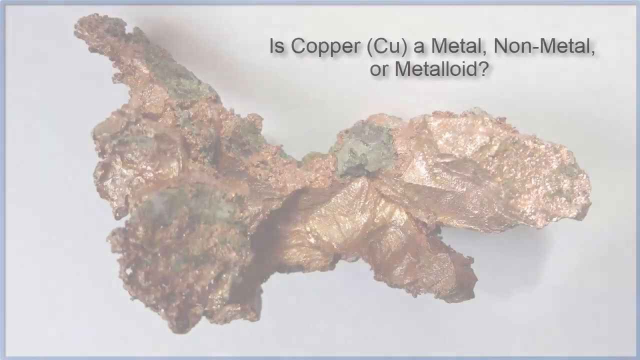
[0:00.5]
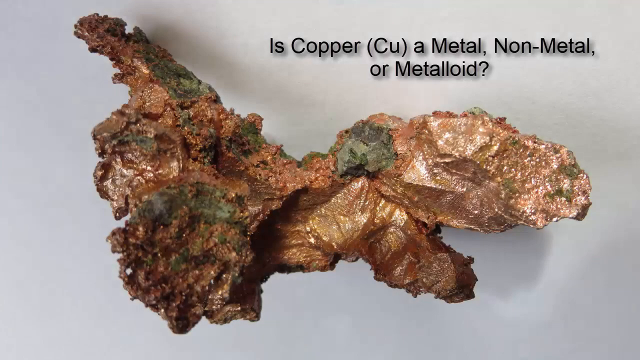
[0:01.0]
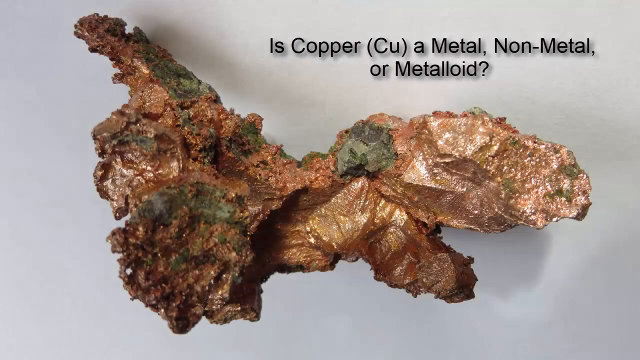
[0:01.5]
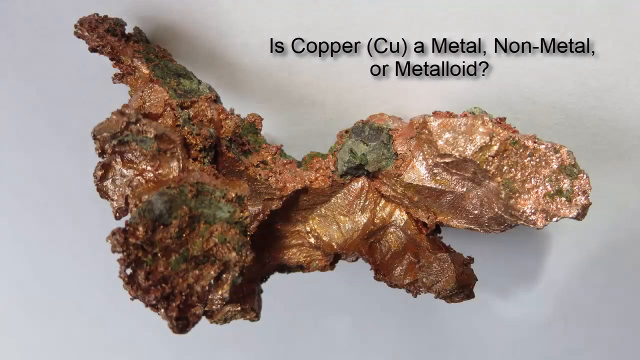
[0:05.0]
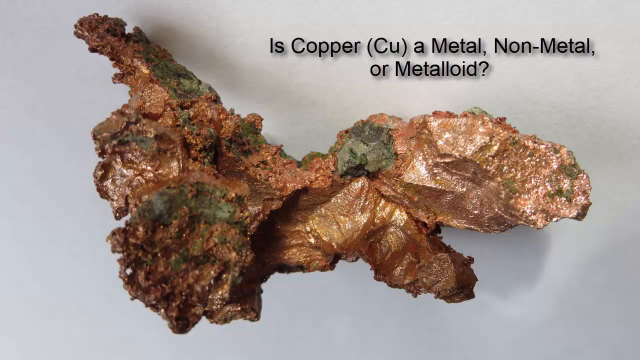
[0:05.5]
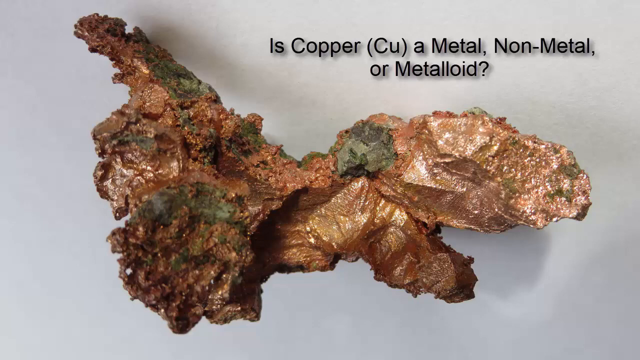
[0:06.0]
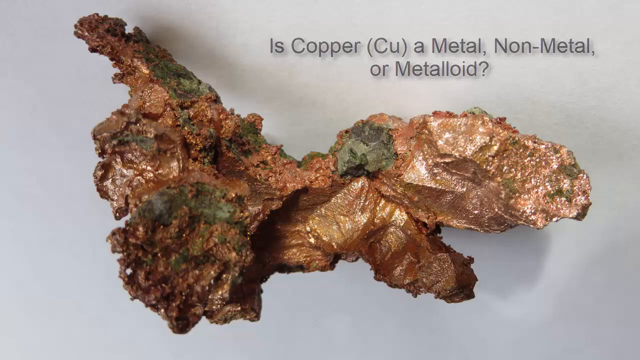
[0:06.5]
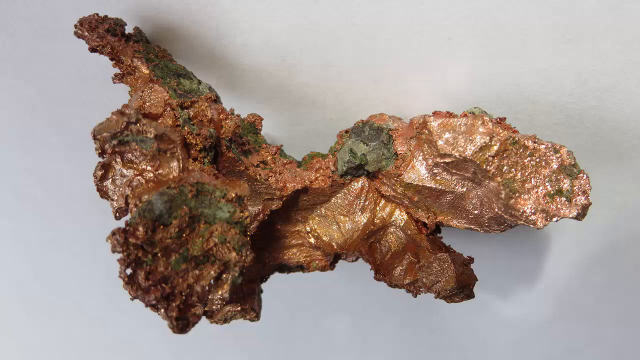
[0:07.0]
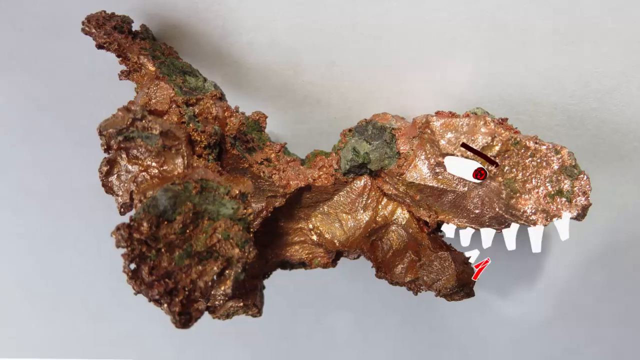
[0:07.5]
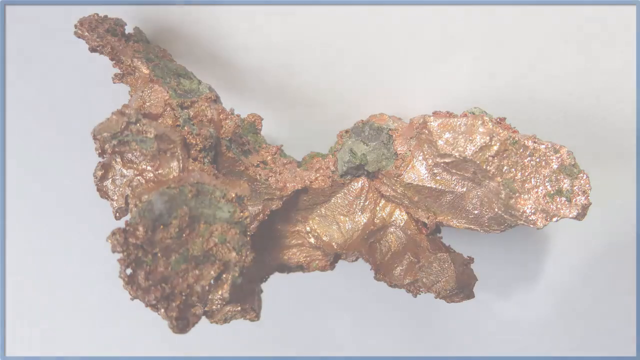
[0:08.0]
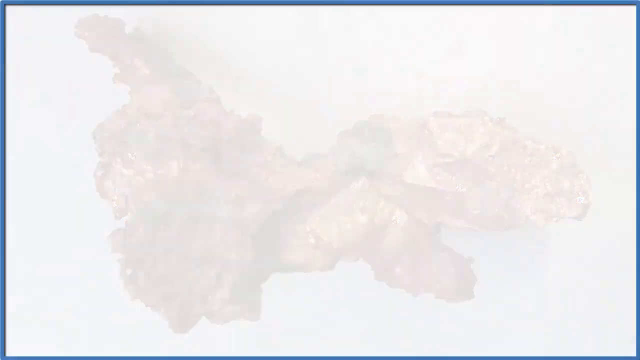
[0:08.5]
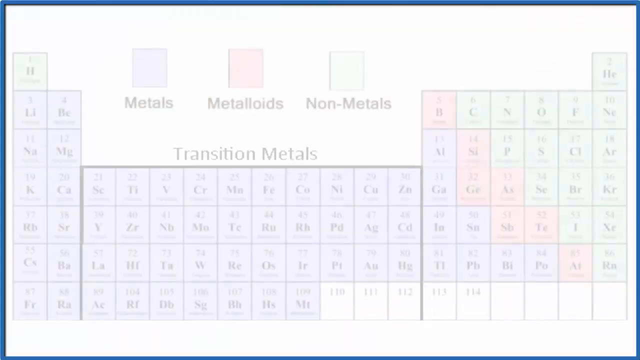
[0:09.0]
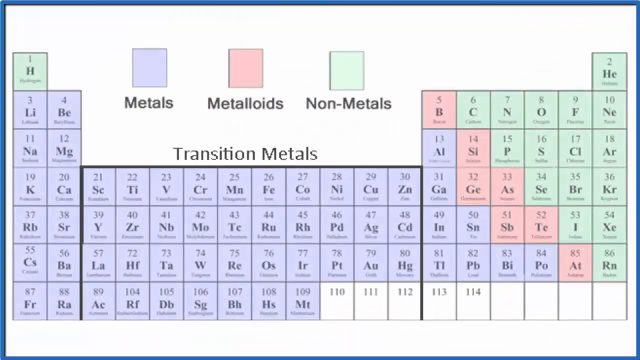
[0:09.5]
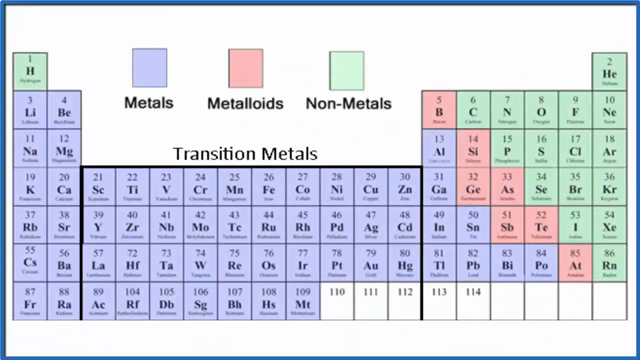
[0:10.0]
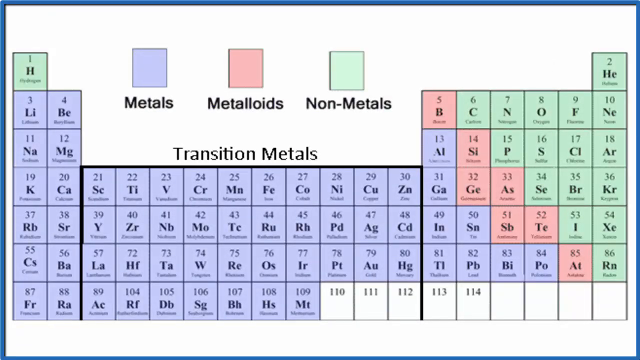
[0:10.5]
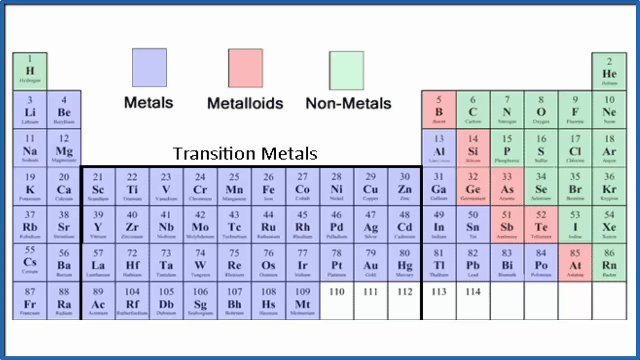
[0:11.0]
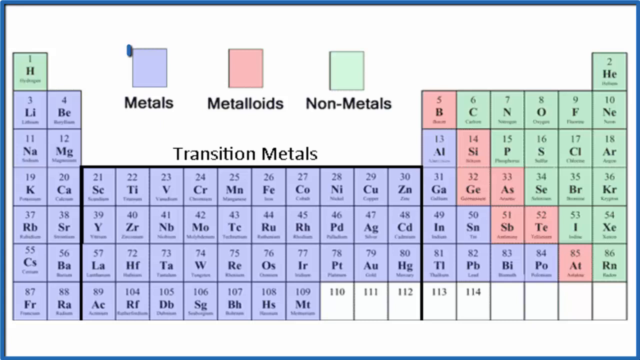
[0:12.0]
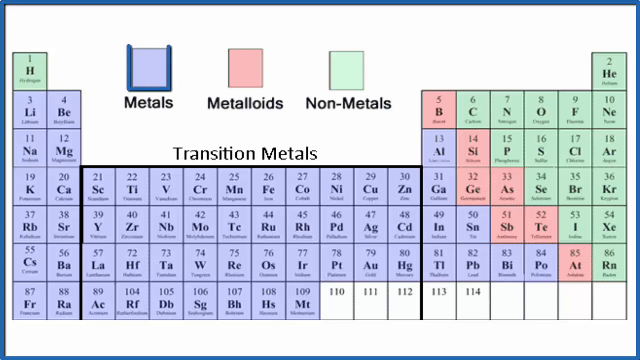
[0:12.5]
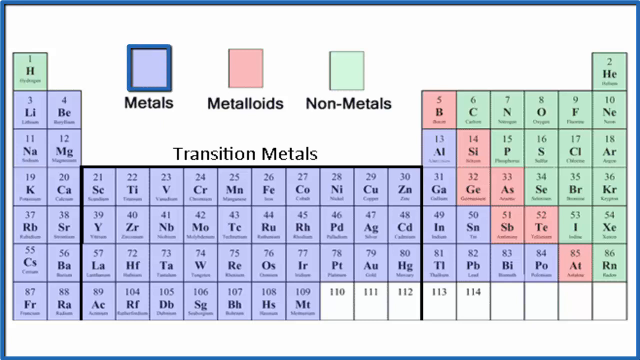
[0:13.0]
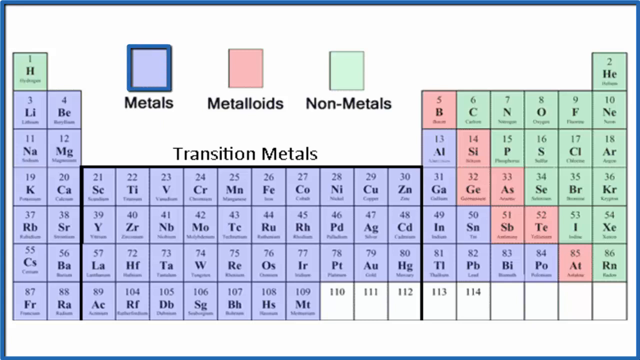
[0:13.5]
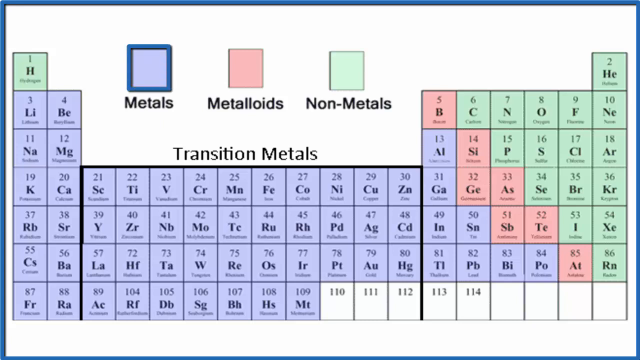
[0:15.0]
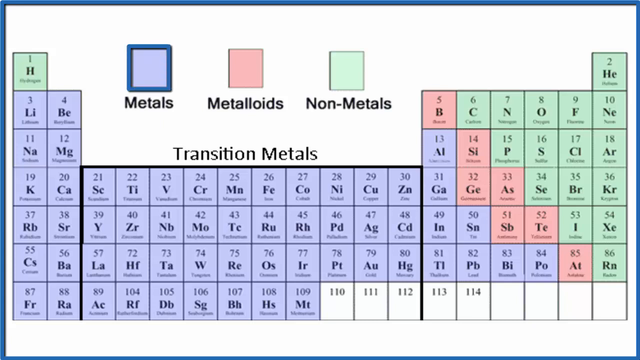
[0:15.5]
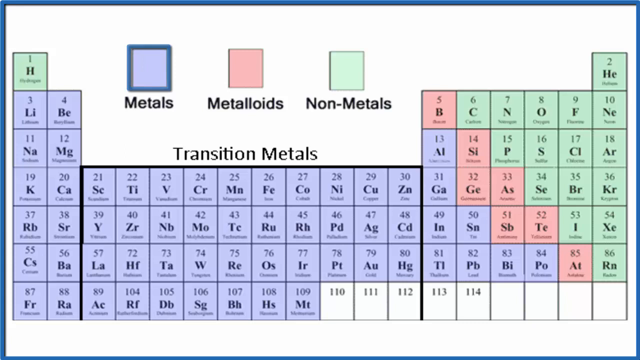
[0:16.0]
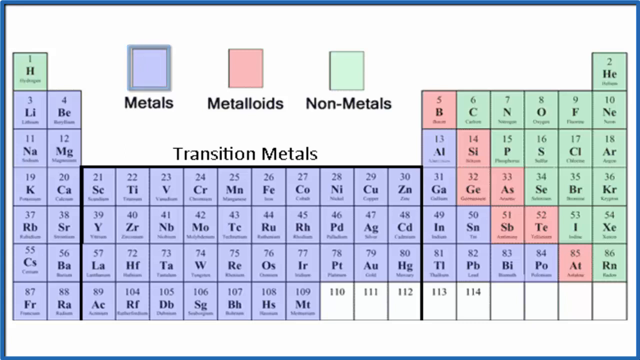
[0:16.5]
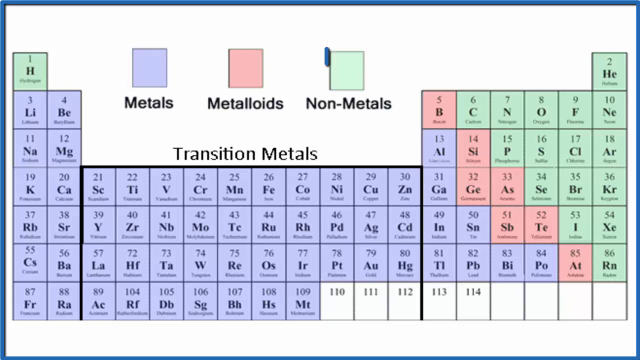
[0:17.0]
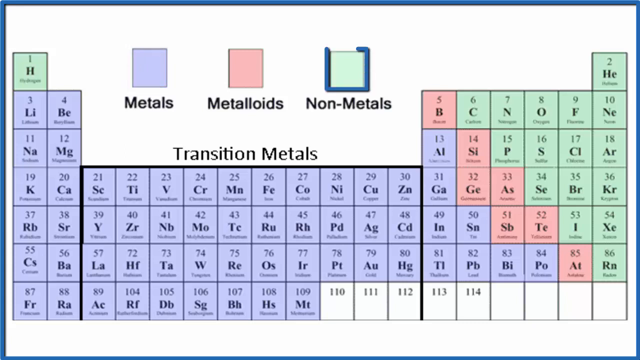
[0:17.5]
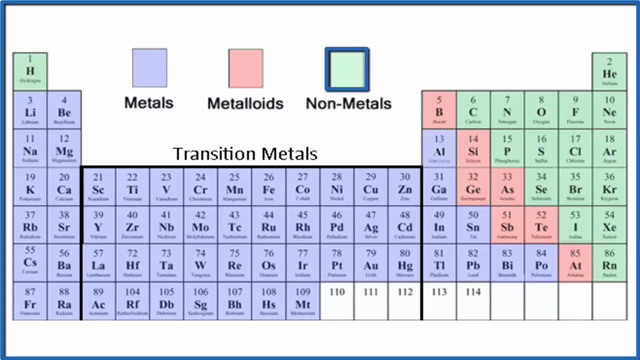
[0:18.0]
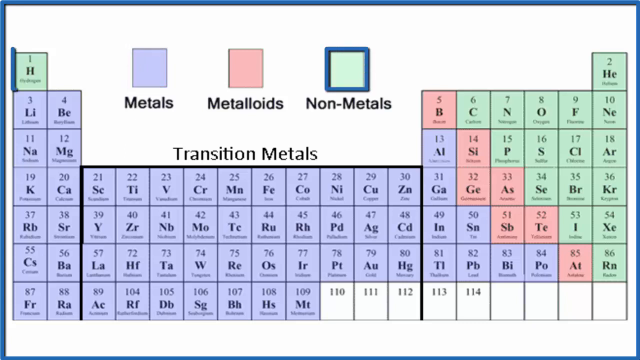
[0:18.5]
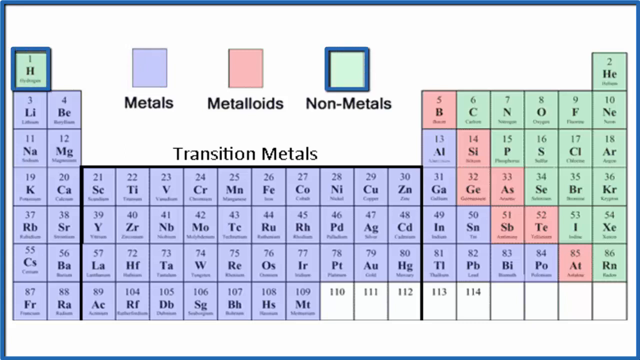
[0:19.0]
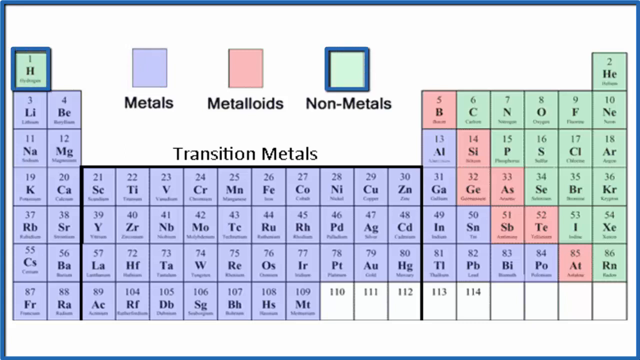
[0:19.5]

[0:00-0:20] A big chunk of copper appears, with text on the side reading "Is copper Cu a metal, non-metal or metalloid". The piece of copper is kind of shaped funny and oblong, and there is a lot of green on it. Very briefly, it is made to look like a dinosaur by adding teeth on the inside and a flashing eye, with white flashing teeth visible in that area. The video then moves to a periodic table where metals are shown in purple, metalloids in pink and non-metals in a greenish color. A rectangle is drawn around the word metals and then another around non-metals, and the letter H is shown in the background on the periodic table.